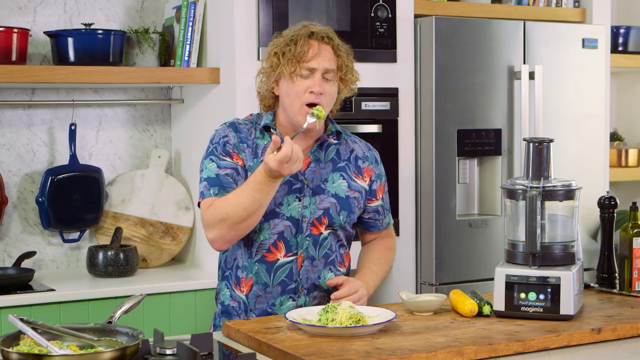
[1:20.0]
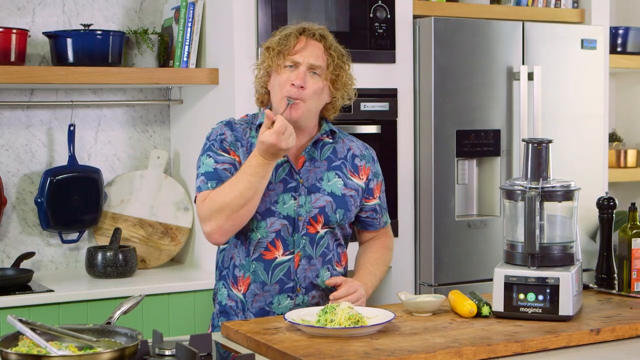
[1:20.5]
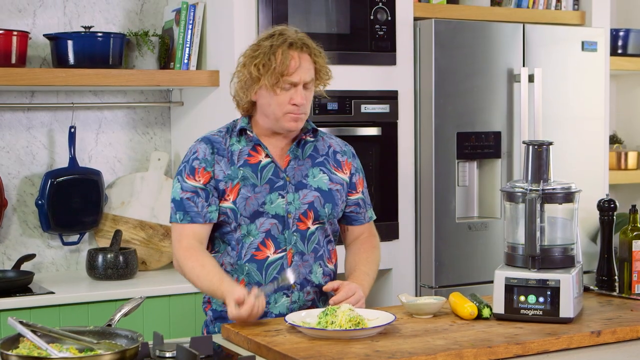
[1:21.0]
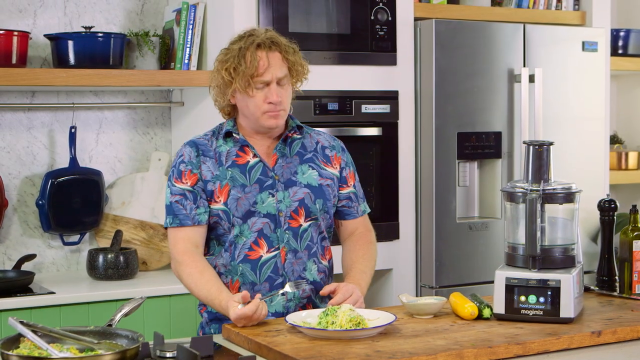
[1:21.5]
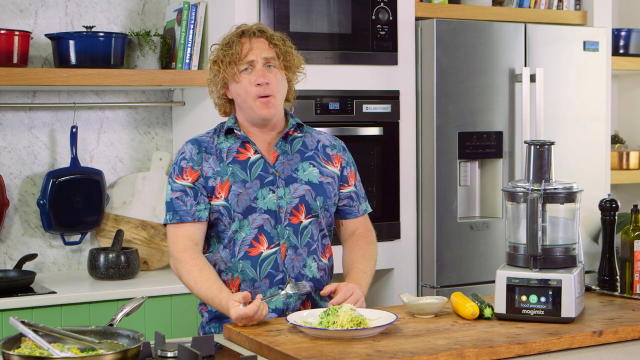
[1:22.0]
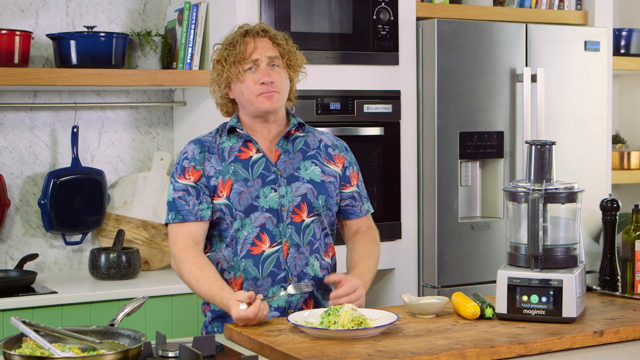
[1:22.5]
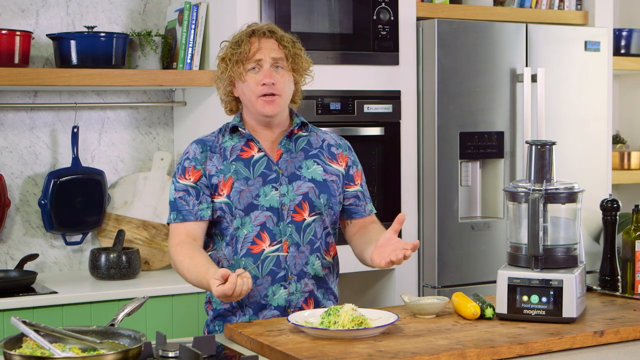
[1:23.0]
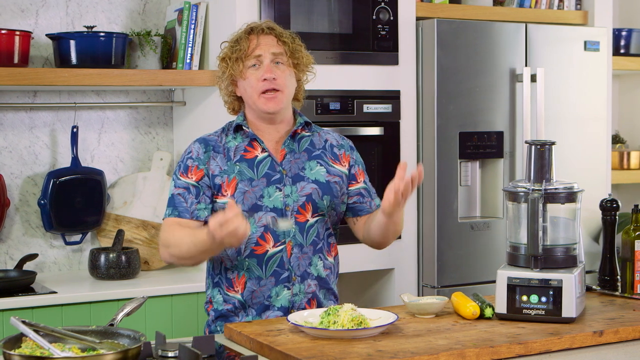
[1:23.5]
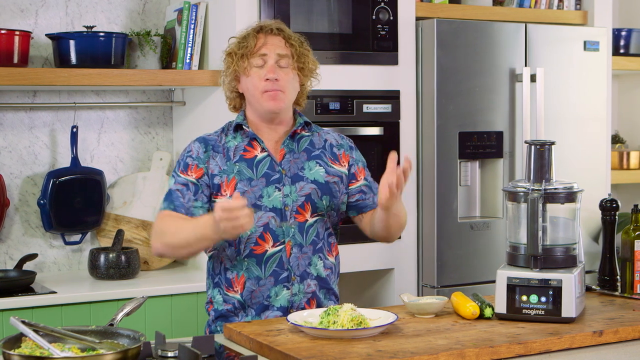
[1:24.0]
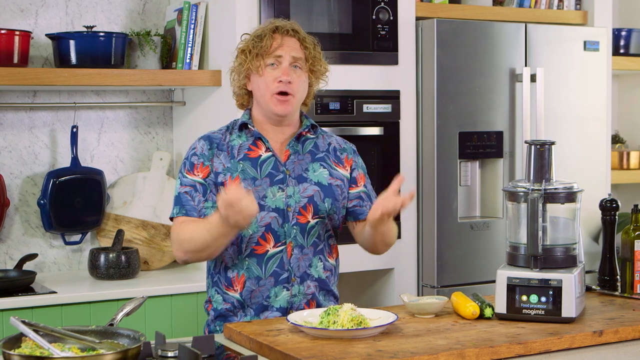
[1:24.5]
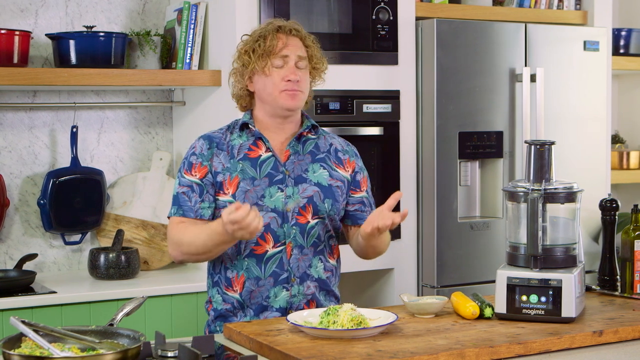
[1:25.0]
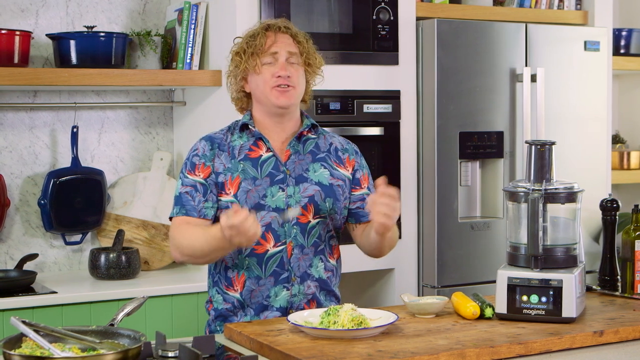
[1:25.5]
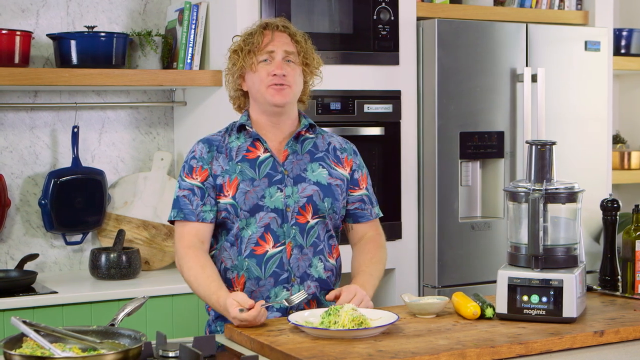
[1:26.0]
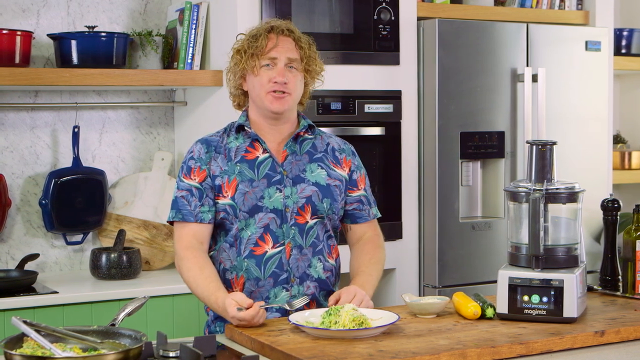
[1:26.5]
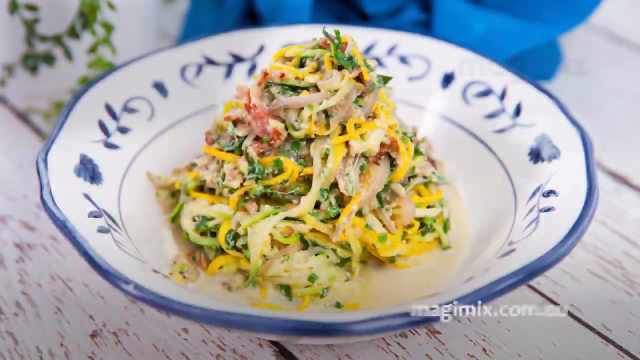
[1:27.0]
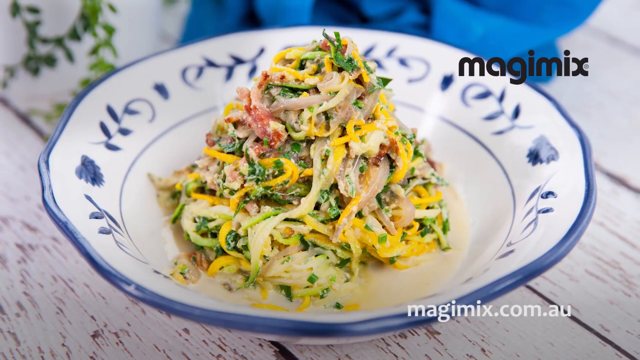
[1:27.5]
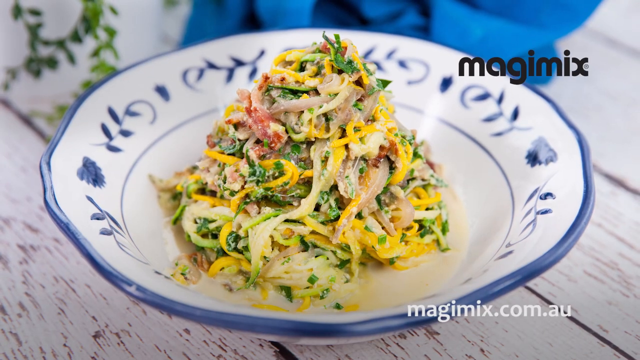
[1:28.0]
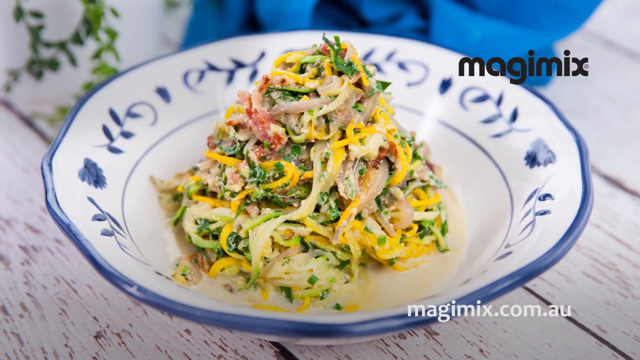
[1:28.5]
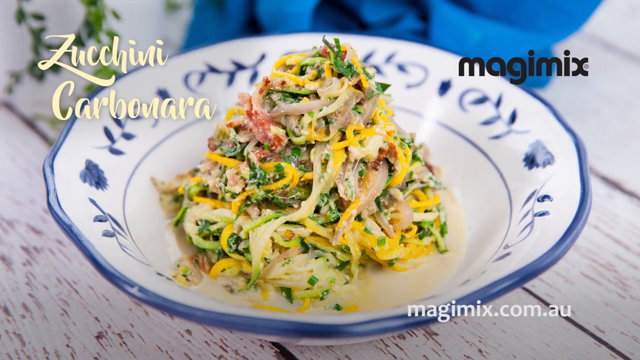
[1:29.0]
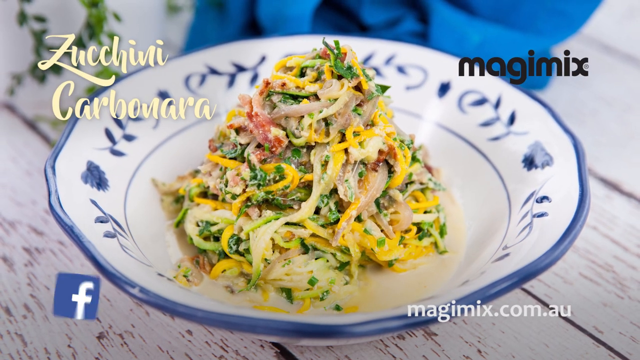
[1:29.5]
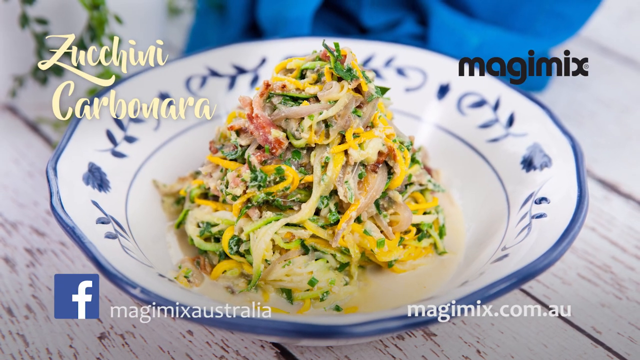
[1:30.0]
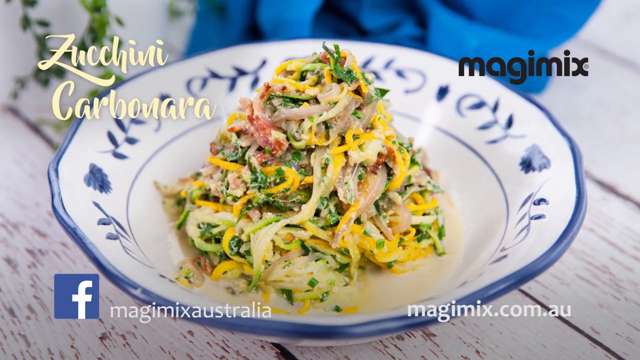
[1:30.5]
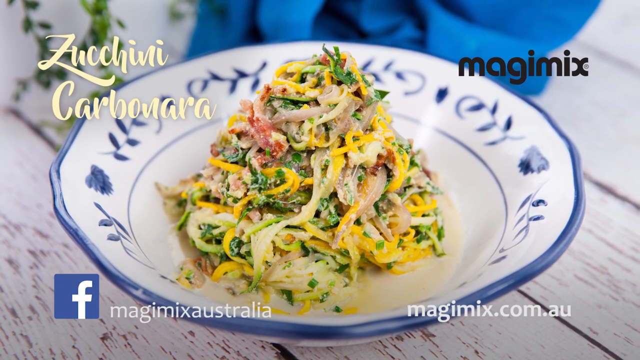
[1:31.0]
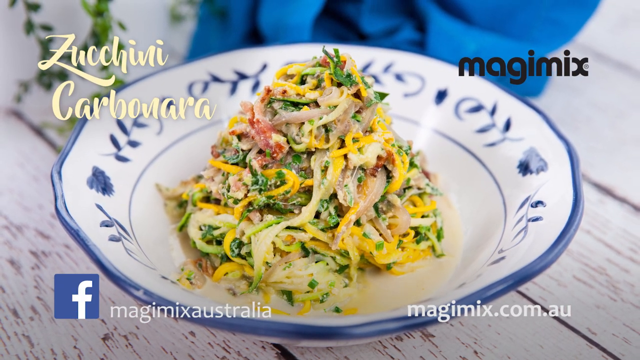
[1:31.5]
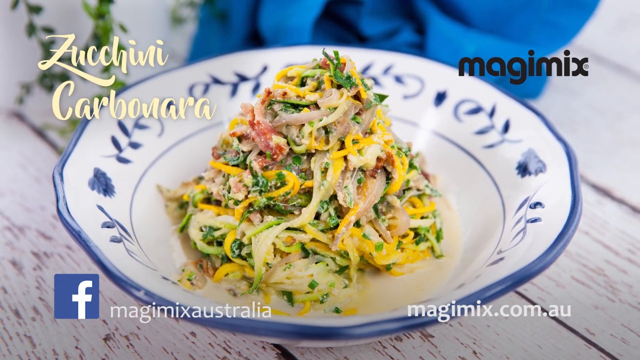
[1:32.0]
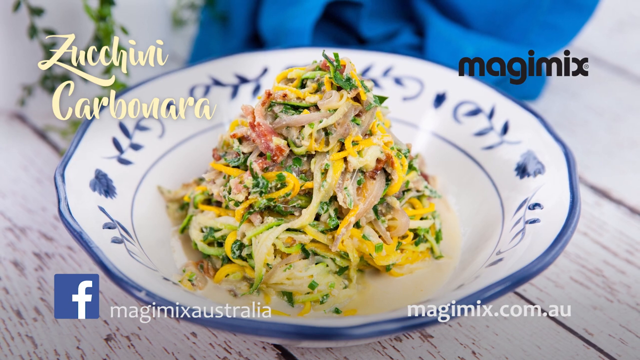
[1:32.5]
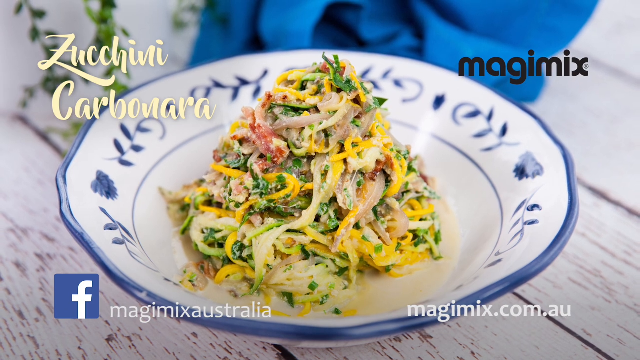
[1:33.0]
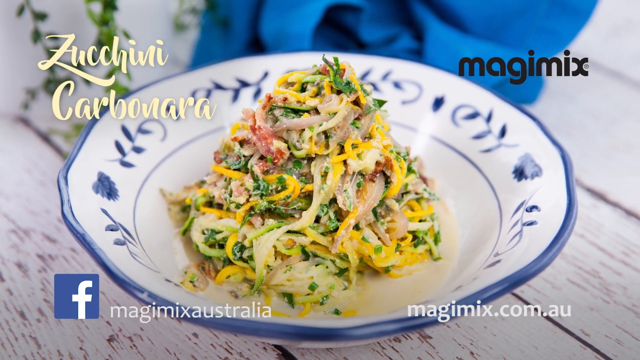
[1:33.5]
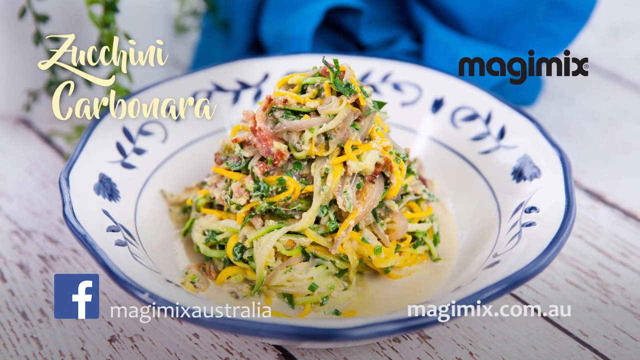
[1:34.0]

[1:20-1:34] The chef takes a fork, puts it into the zucchini carbonara, and twists it the way one twists a fork when eating spaghetti. He pulls up some of the mixture and puts it in his mouth to taste, and his facial expression shows that it tastes as good as it looks. The finished zucchini carbonara is a mixture of yellow and green, with the eggs looking like snowflakes on top of the green and yellow.